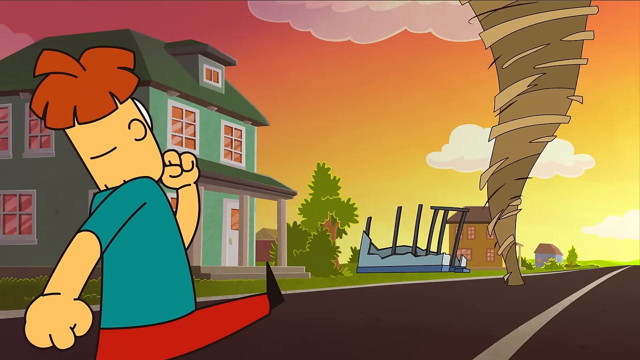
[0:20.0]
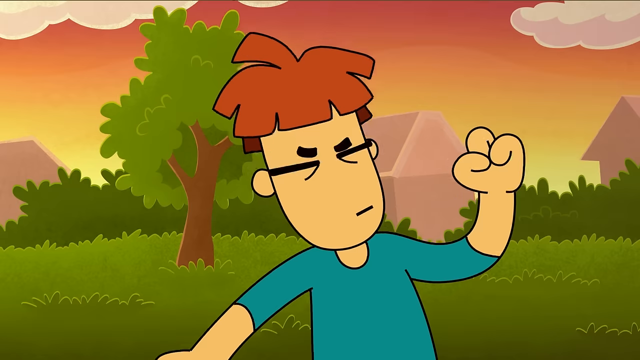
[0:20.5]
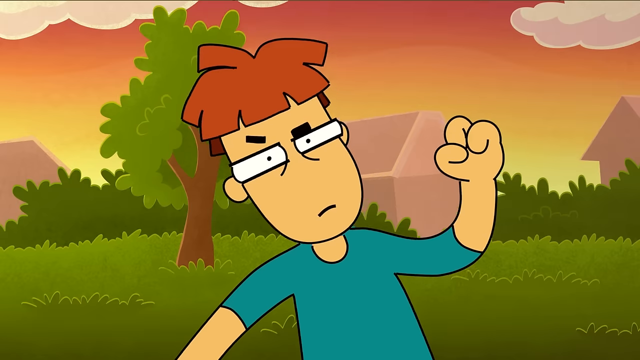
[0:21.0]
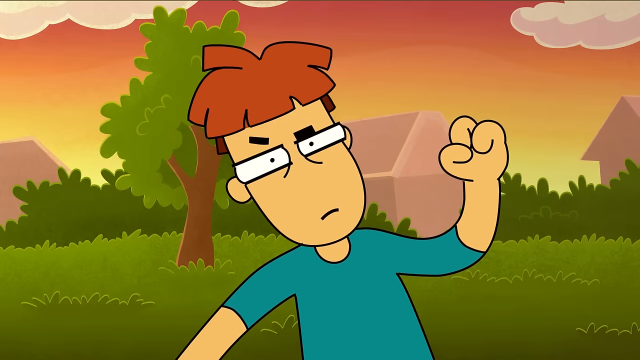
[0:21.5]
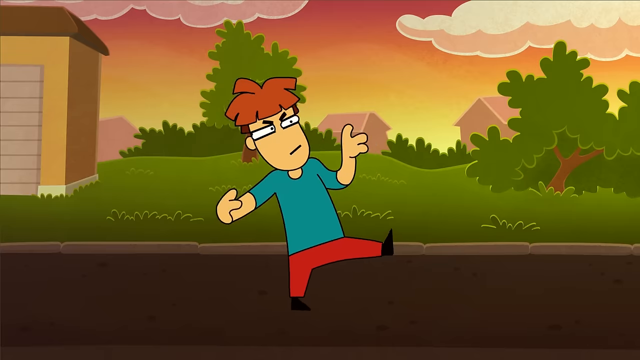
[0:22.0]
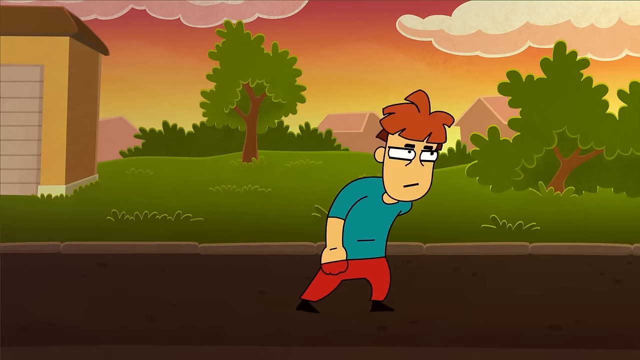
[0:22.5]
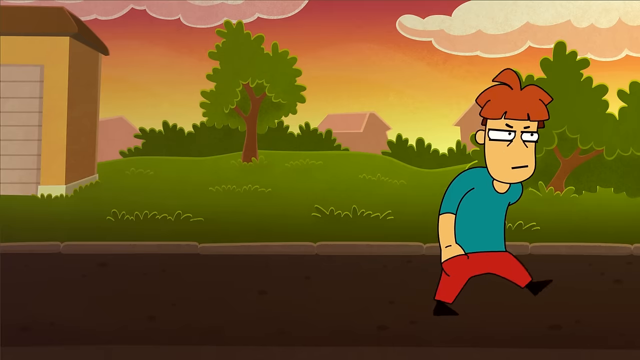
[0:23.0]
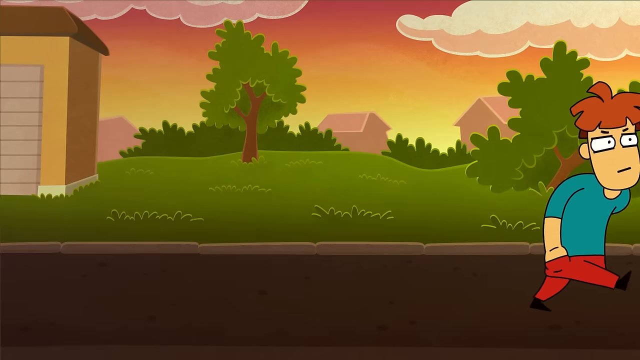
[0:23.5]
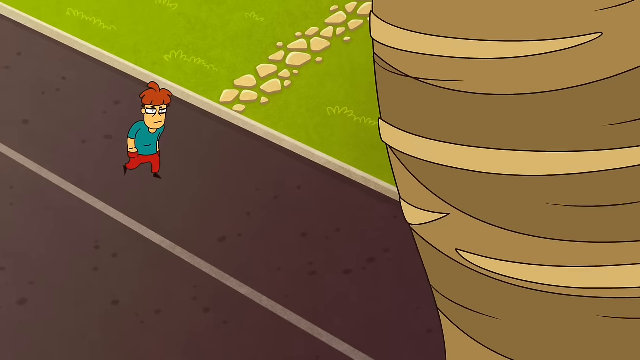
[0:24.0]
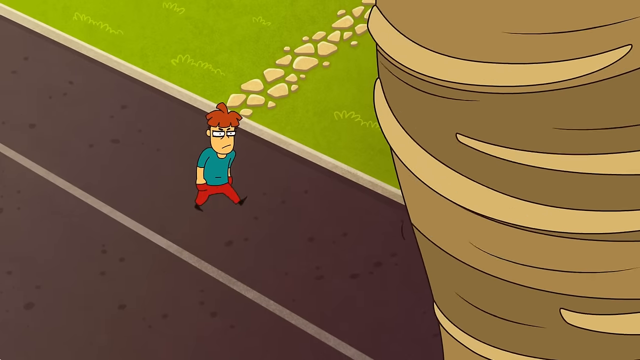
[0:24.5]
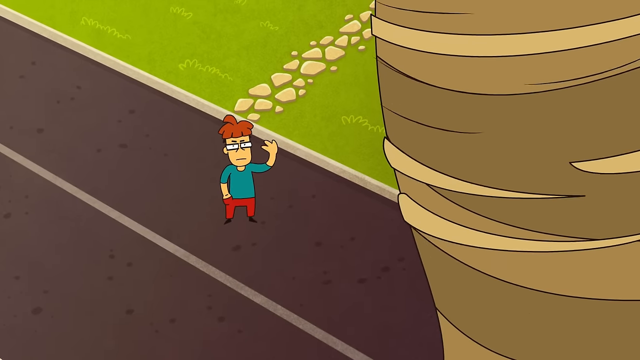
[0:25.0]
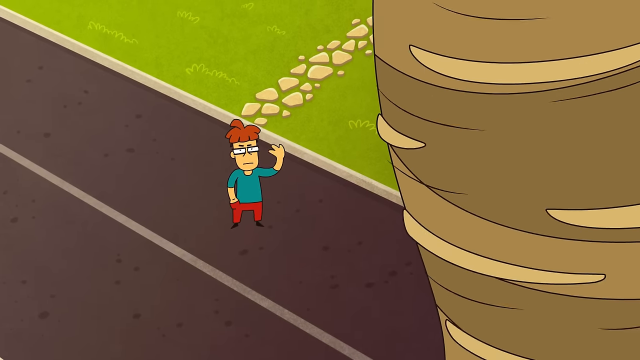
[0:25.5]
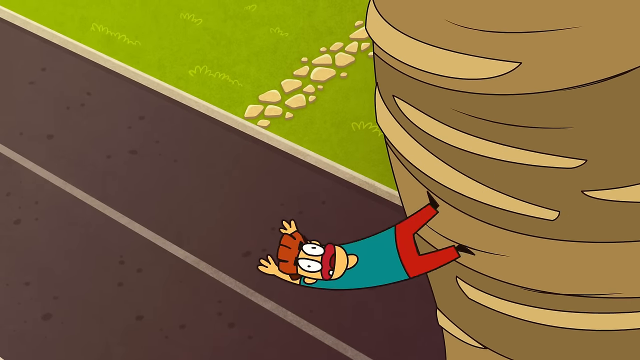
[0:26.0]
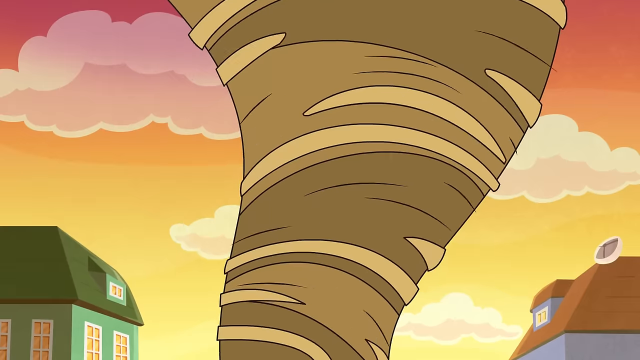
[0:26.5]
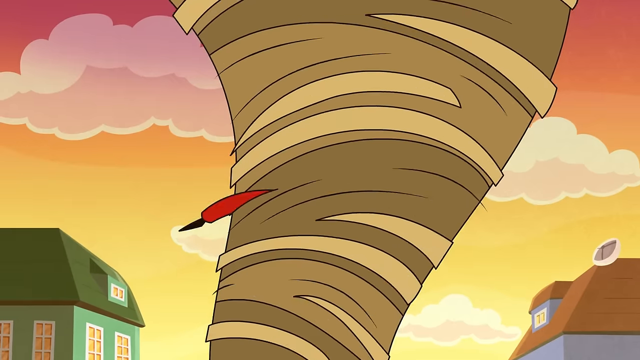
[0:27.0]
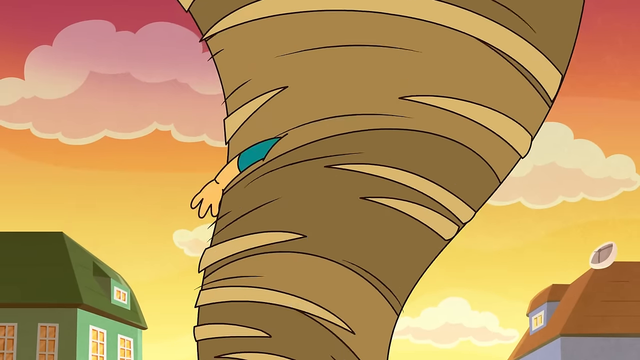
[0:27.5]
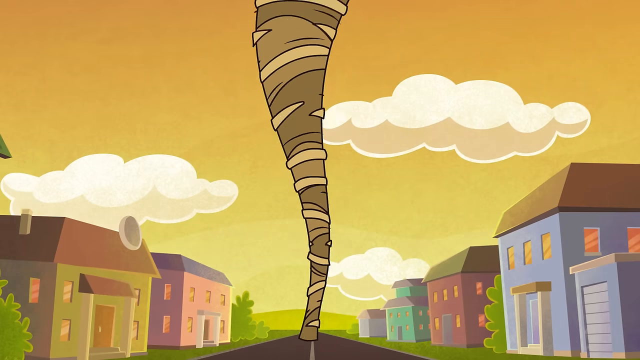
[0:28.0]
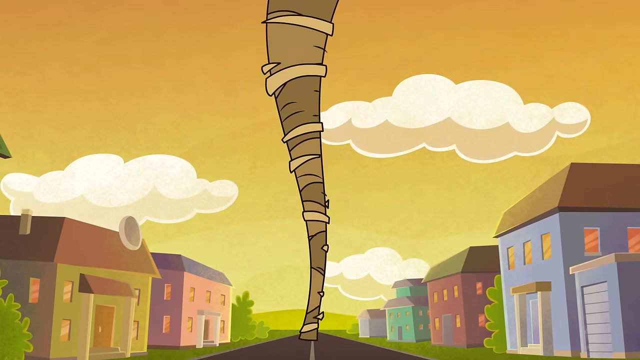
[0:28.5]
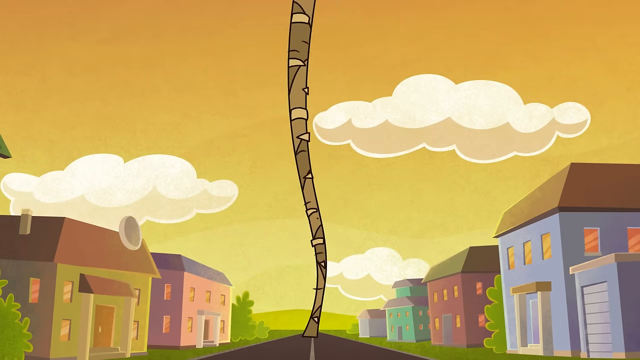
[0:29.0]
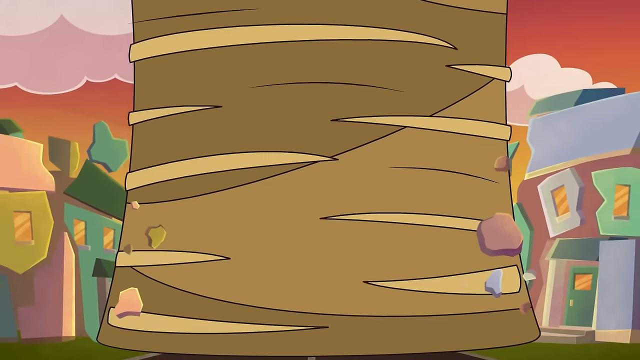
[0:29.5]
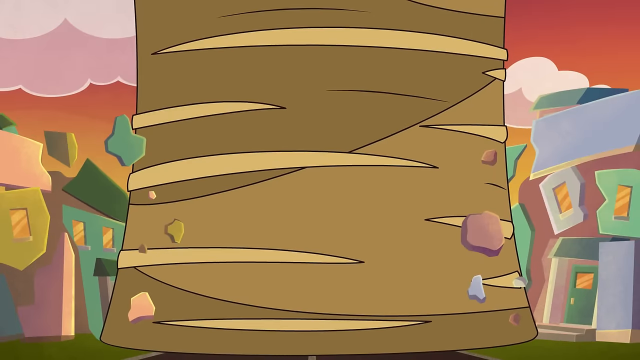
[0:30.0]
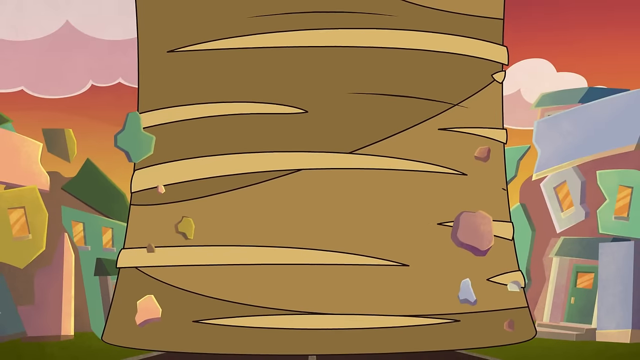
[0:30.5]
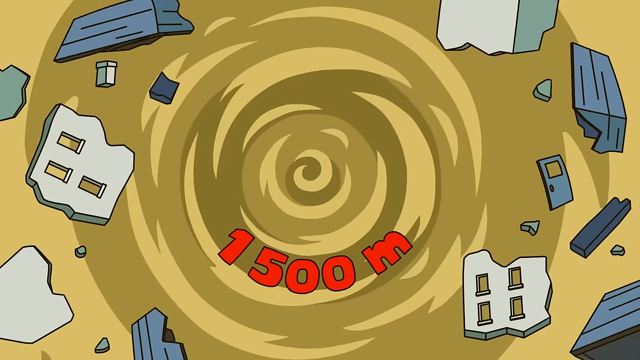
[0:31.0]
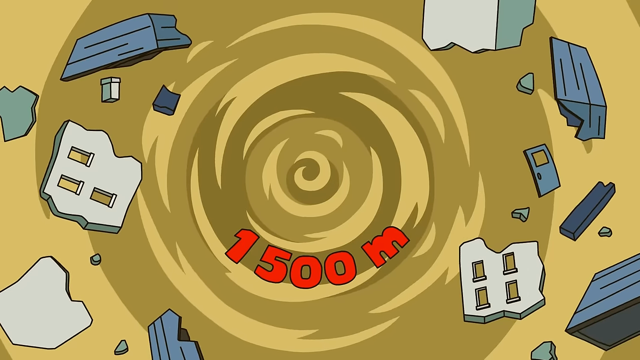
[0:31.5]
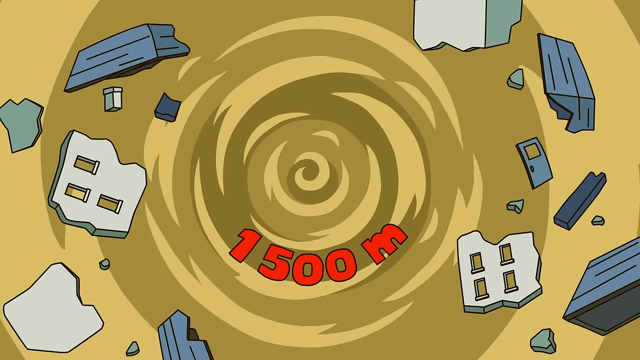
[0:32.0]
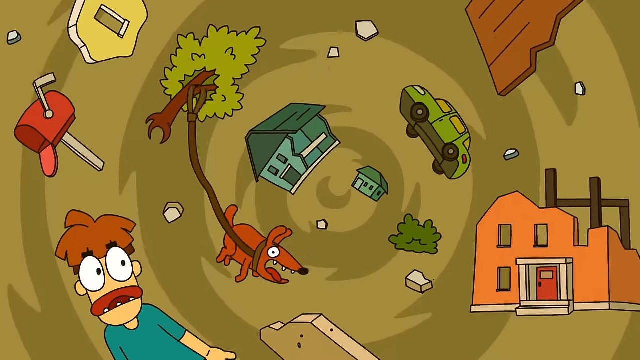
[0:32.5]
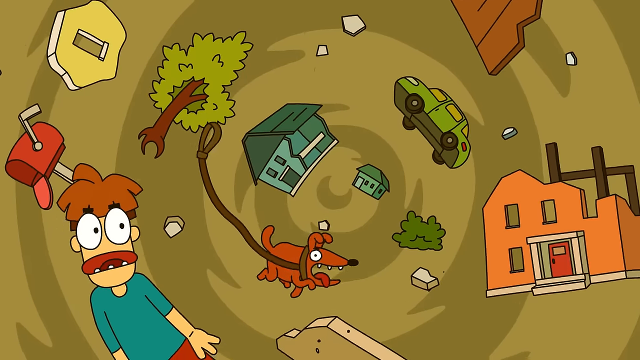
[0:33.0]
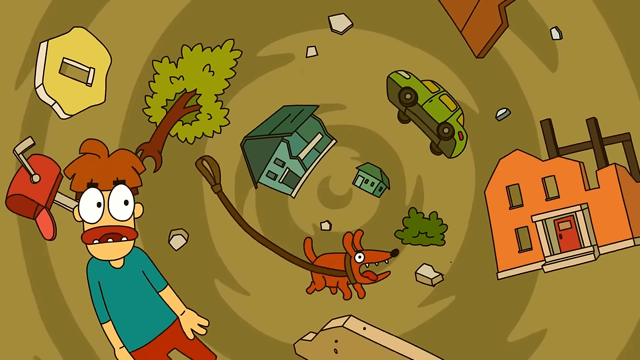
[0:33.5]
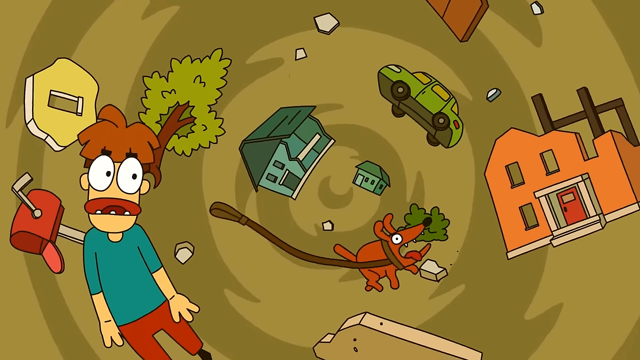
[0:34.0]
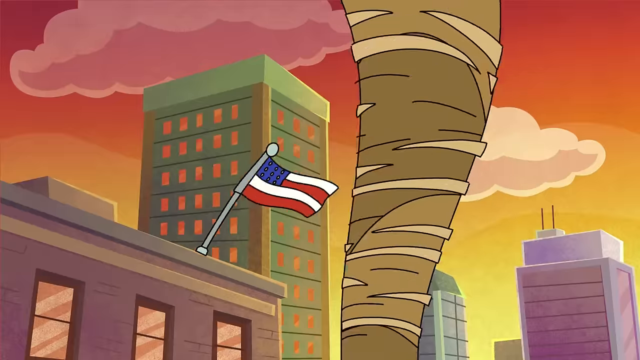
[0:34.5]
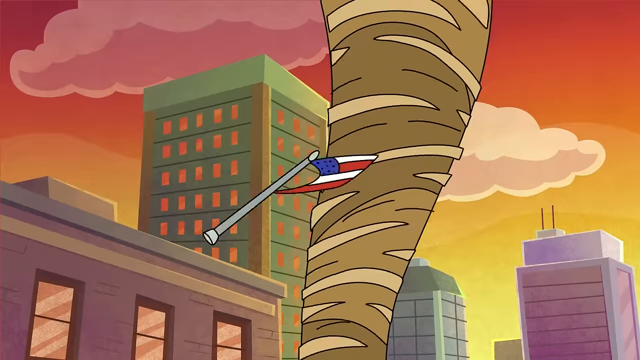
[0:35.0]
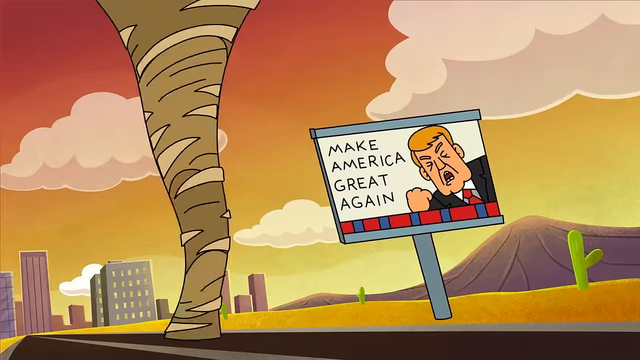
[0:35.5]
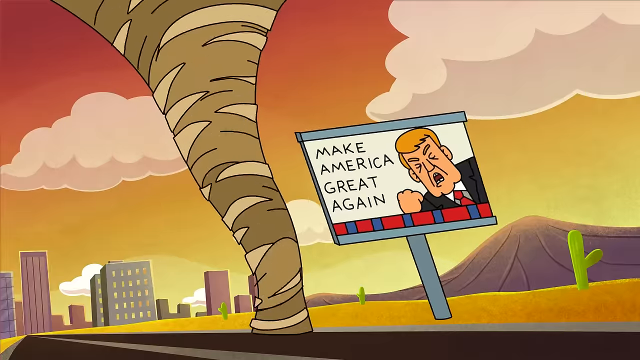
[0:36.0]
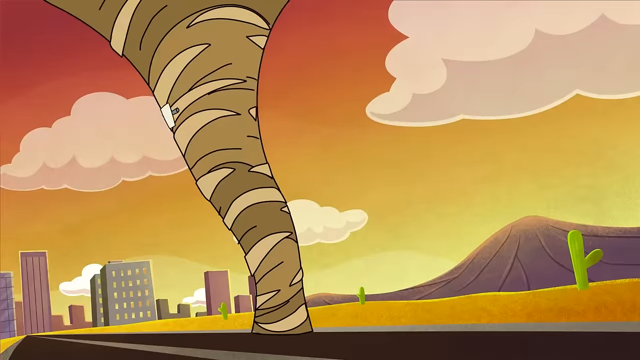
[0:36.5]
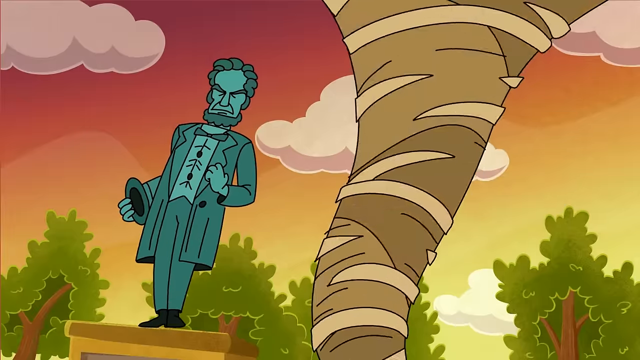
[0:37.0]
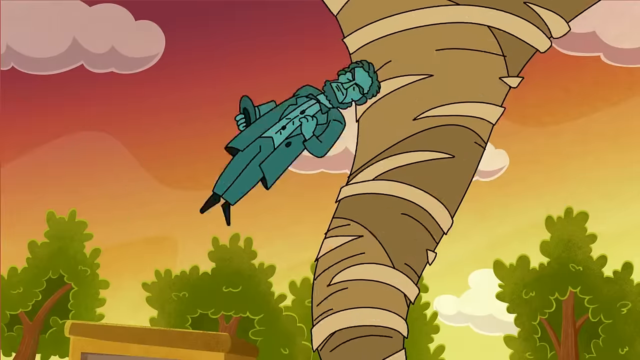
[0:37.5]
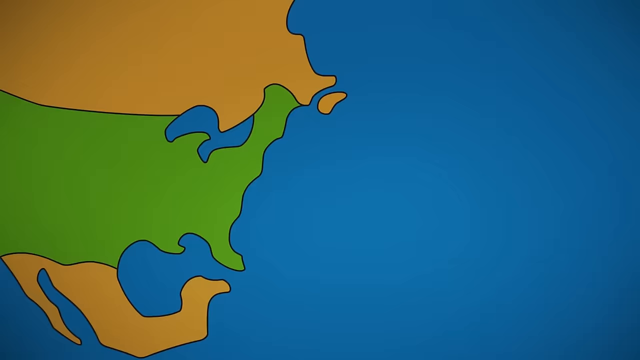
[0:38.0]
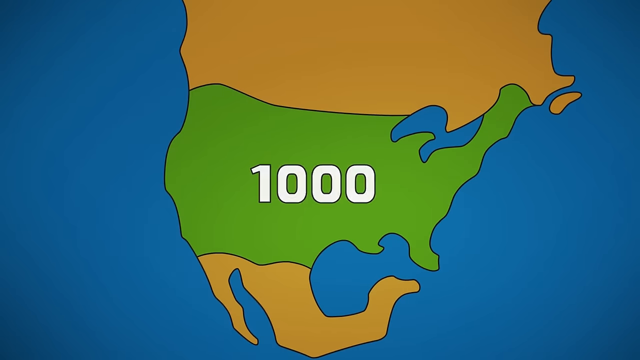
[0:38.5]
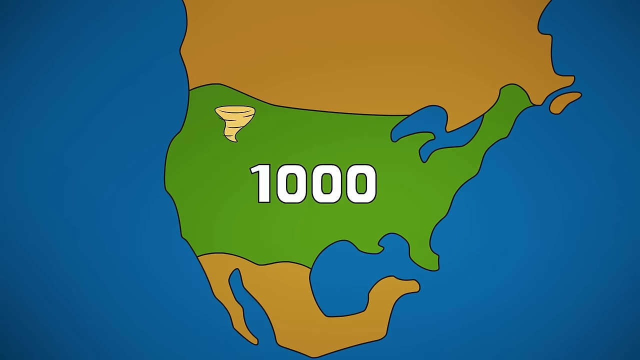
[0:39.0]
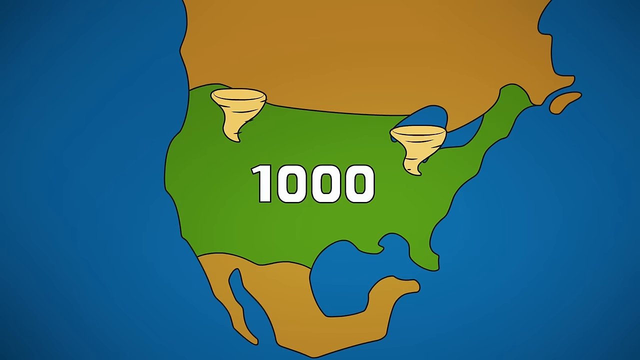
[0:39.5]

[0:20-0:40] In a cartoon scene, a two-story green house with many windows is on the left side of the screen behind a cartoonish character. The character, in front of the house on the left side of the screen, has brownish-red or brown hair and wears a short-sleeved green or aqua-green shirt, pants the same color as their hair, and black shoes. On the right side of the screen is what looks like a brown tornado. The view changes to the front of the character, whose eyes are squinted. They walk toward the tornado, wave at it, and get sucked up into it, spinning around and around. The tornado skinnies itself and moves closer to the camera. Then what appears to be the top of the tornado is shown, with red text at the bottom of the screen reading "1500 M".